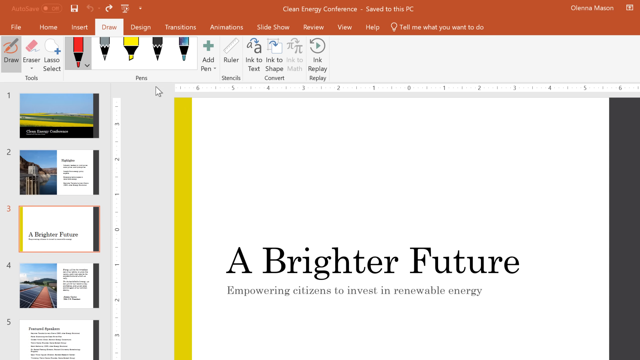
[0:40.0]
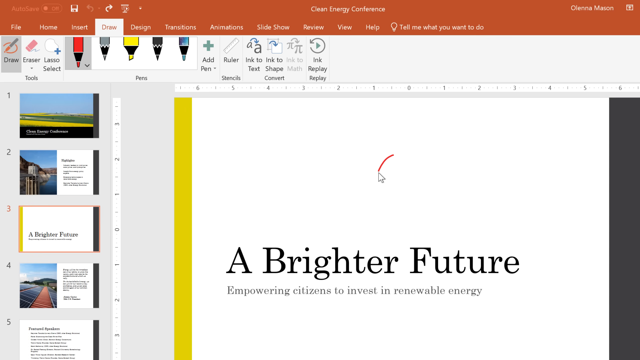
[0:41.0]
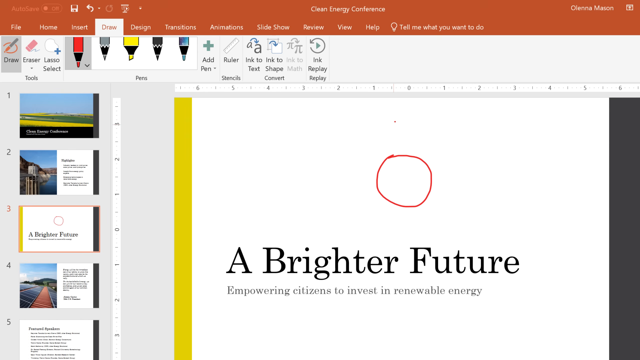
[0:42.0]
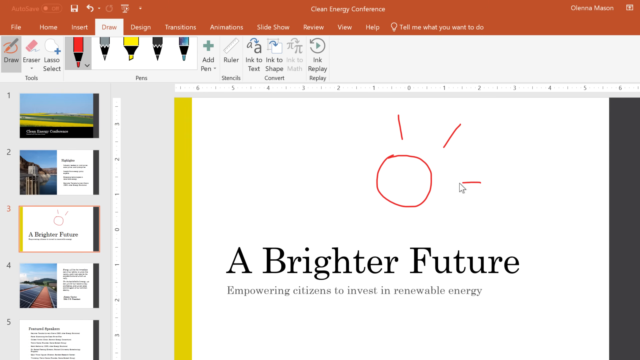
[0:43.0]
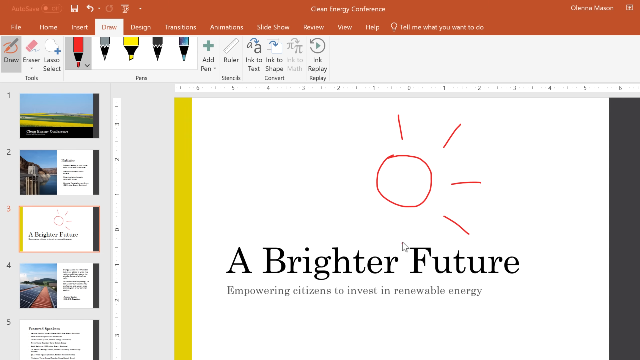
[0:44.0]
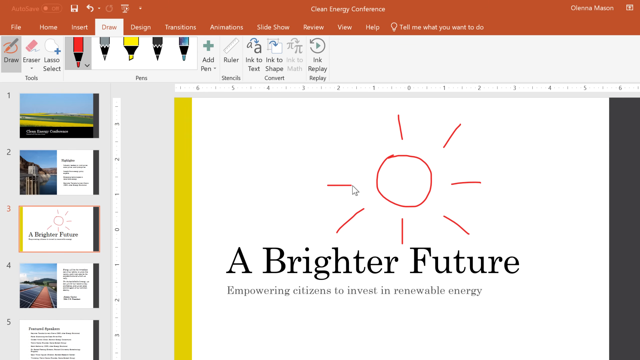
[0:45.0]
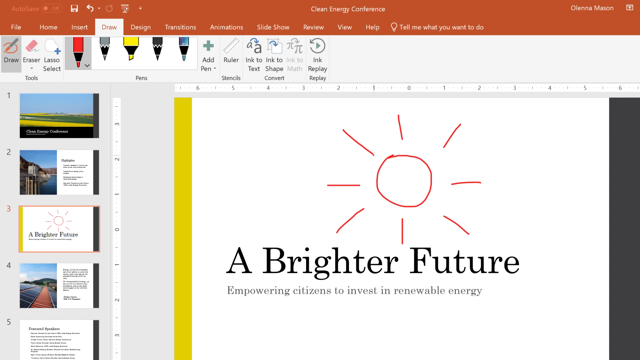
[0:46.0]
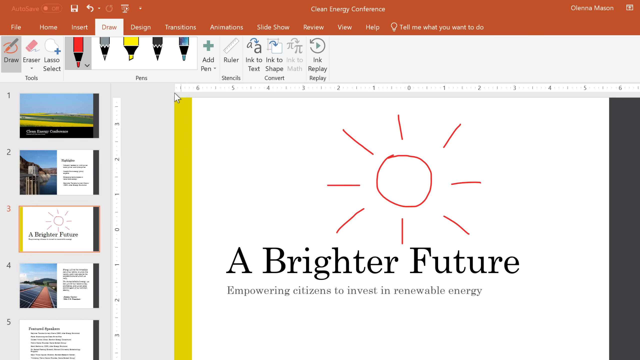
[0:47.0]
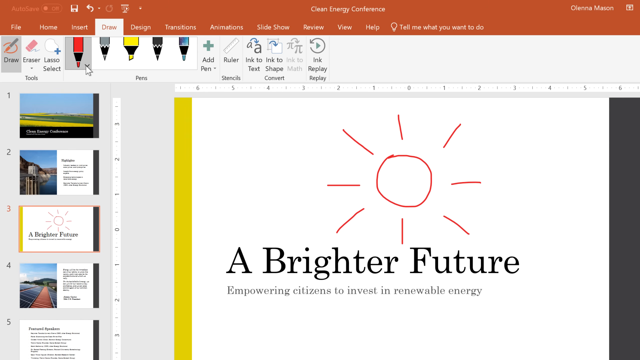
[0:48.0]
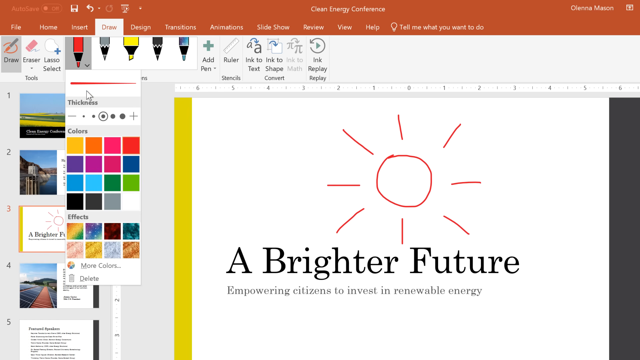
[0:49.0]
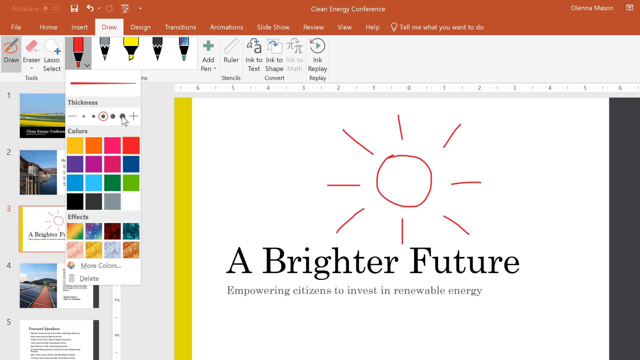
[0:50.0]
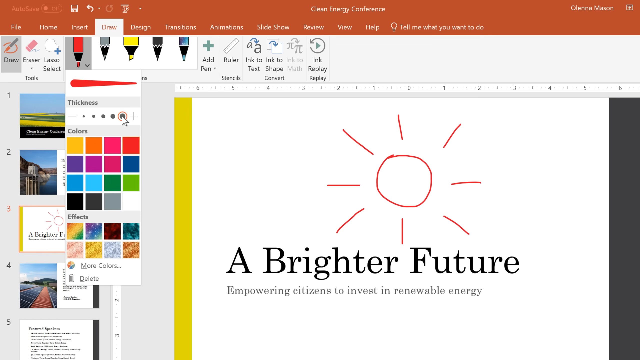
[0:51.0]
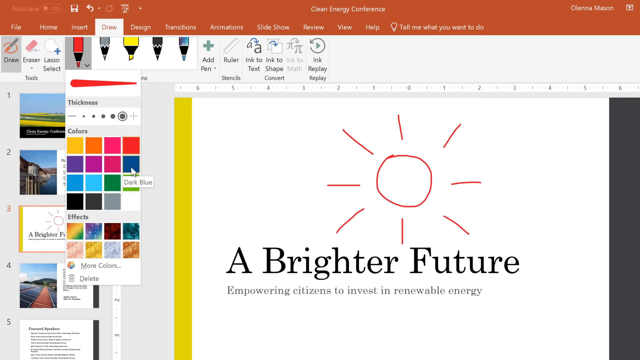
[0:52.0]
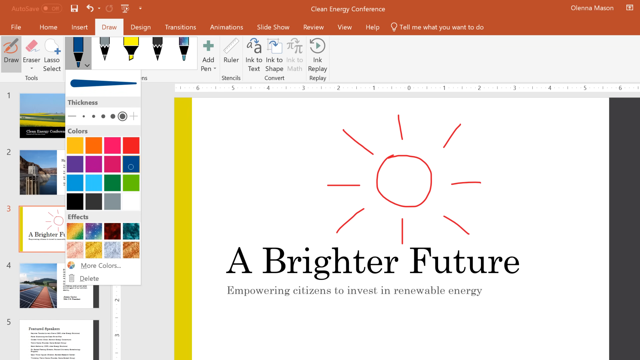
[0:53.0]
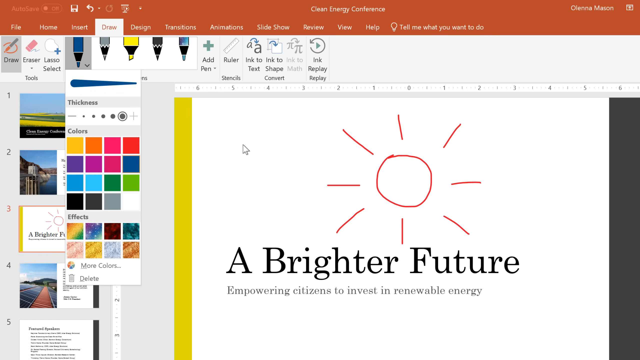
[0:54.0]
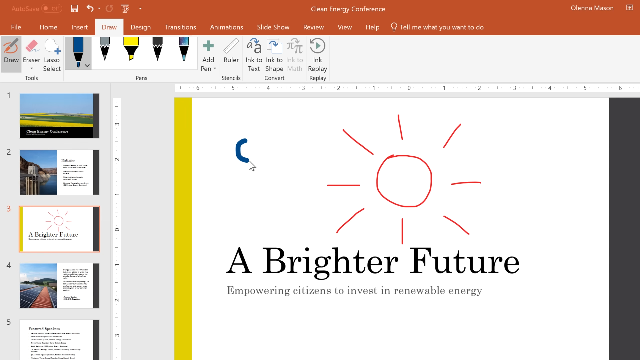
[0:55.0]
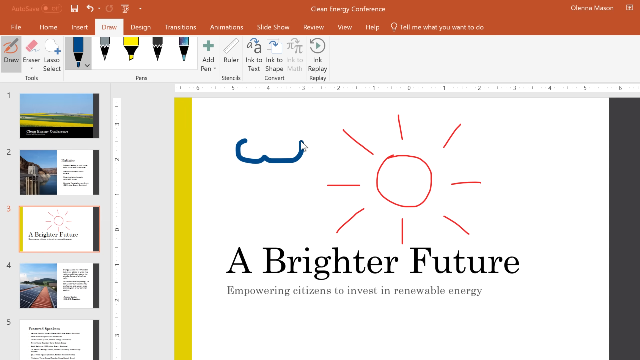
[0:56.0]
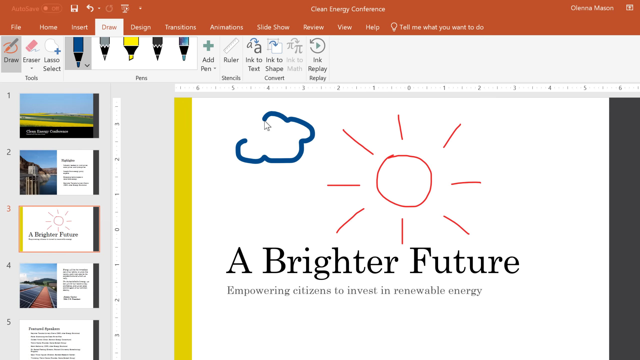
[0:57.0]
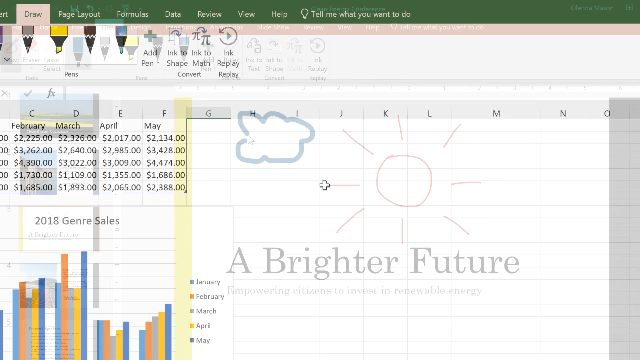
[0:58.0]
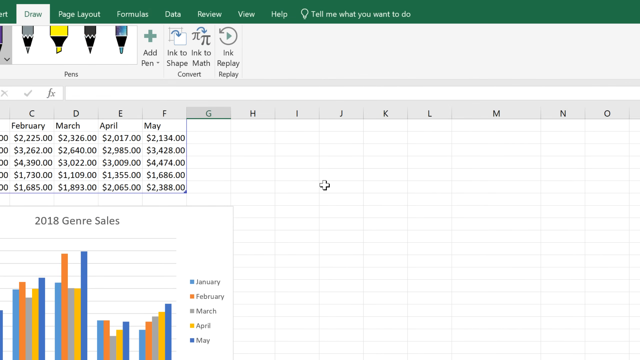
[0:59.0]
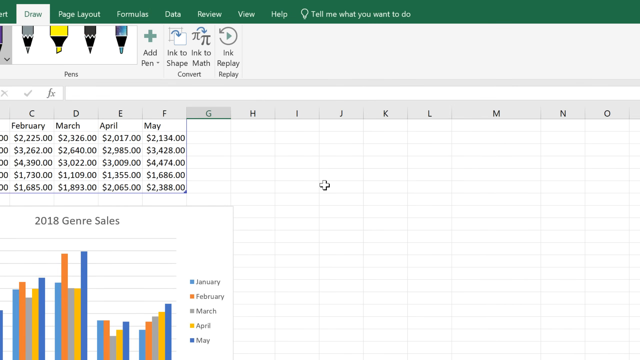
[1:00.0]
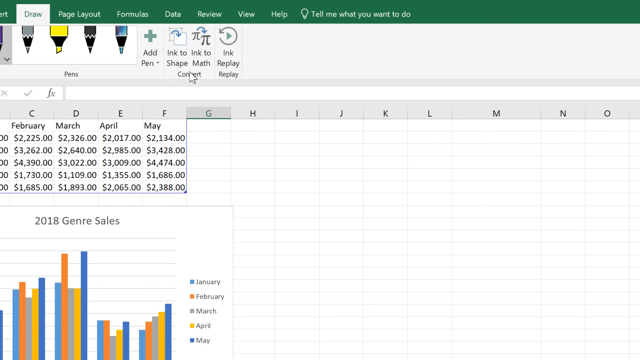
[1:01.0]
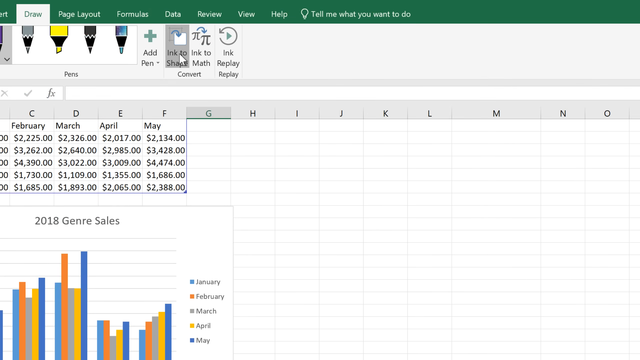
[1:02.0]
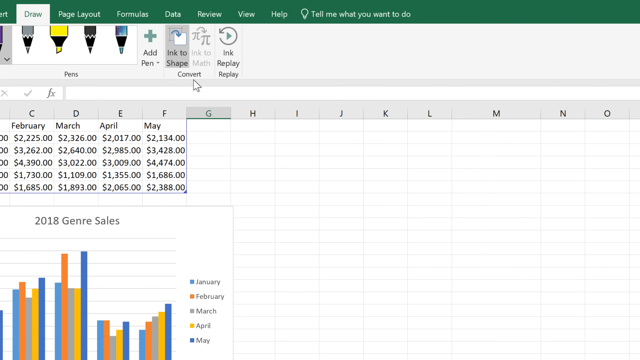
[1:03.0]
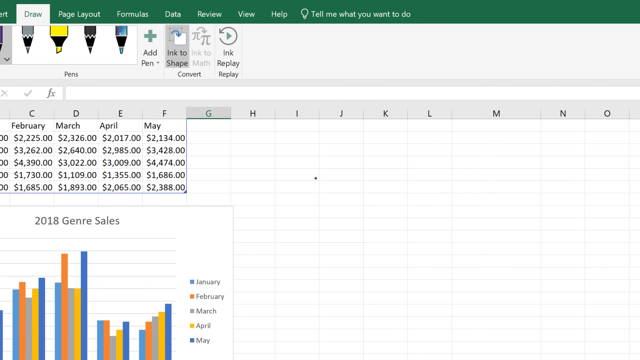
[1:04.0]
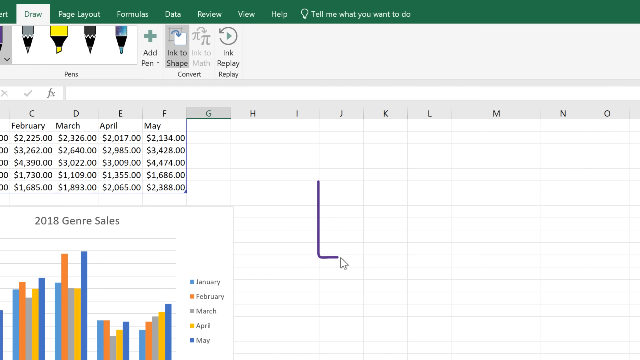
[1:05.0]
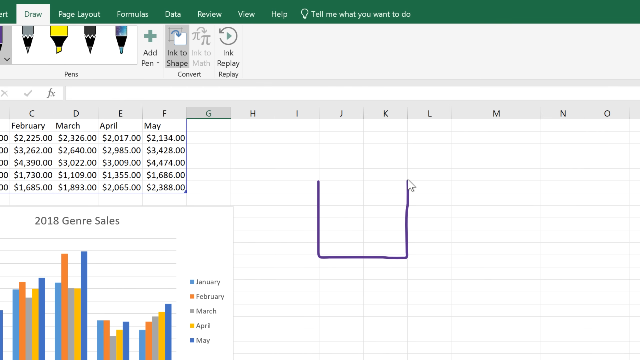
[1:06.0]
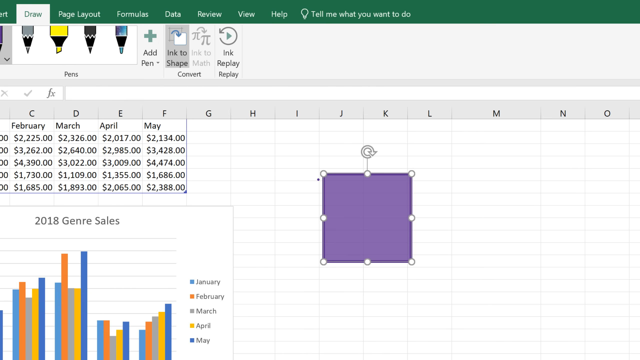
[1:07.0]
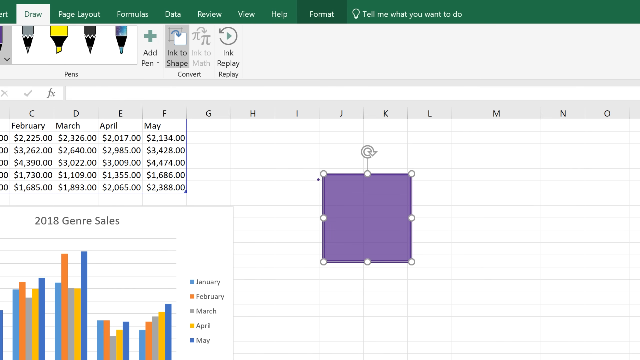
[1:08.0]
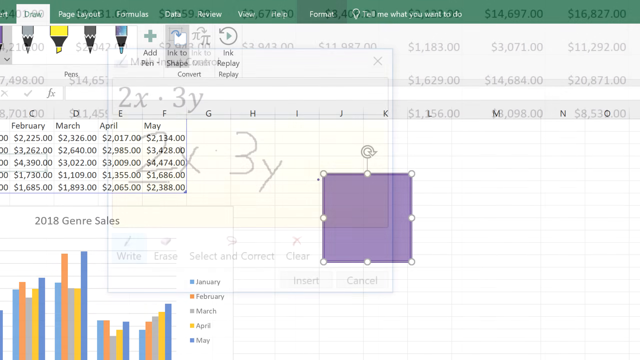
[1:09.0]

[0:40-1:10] The mouse pointer is in the presentation area, and a red circle is being drawn. Little lines are created around the circle, almost to simulate the sun. The mouse pointer goes over to the red marker that points down; when it is selected, different colors are available to choose from. The line is thickened and blue is chosen, and the red marker turns into a blue marker. The mouse pointer moves back over the PowerPoint presentation, and a cloud is drawn with the blue marker. The scene then changes to an Excel spreadsheet with different columns and a chart on the bottom part of the screen. The mouse pointer goes up to the menu and clicks on one of the options, and a purple square is drawn in the spreadsheet, kind of highlighting that area in purple.